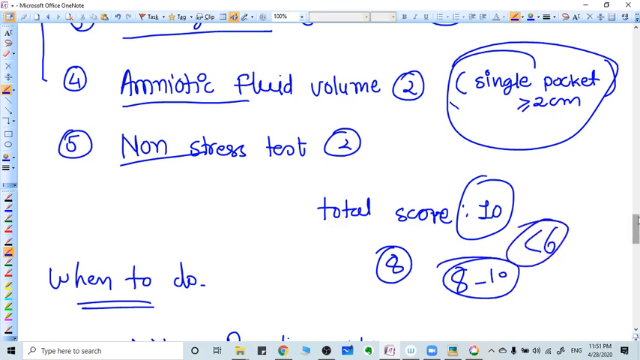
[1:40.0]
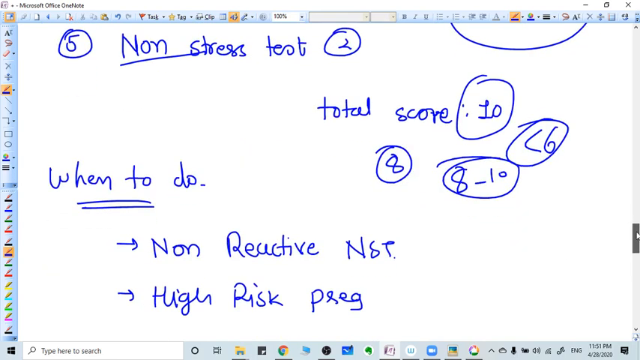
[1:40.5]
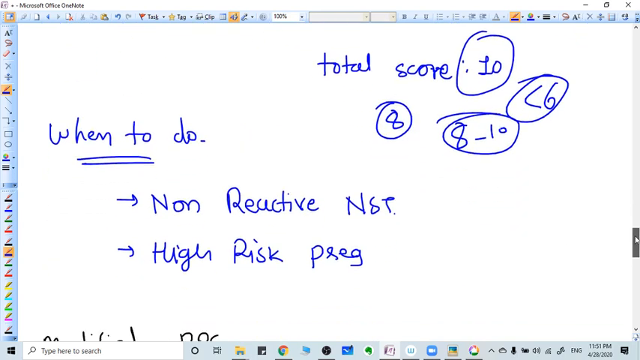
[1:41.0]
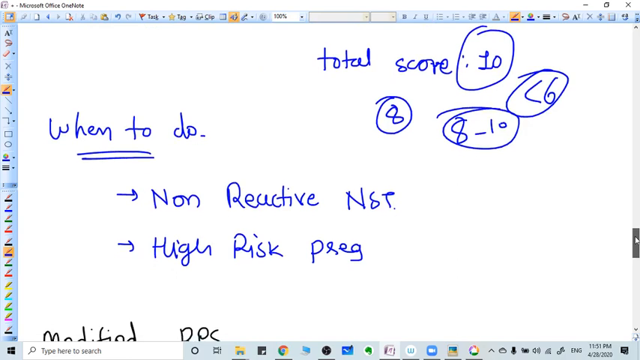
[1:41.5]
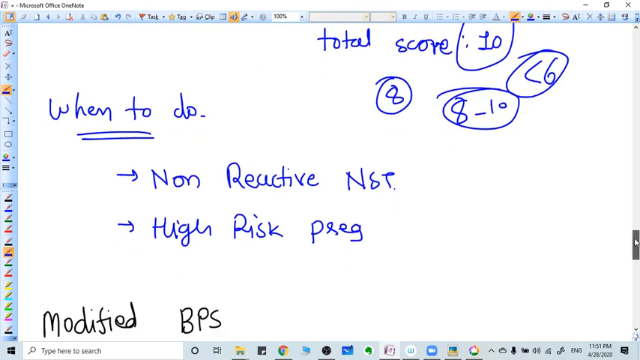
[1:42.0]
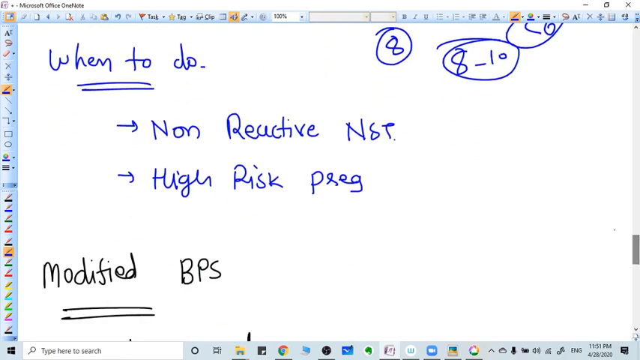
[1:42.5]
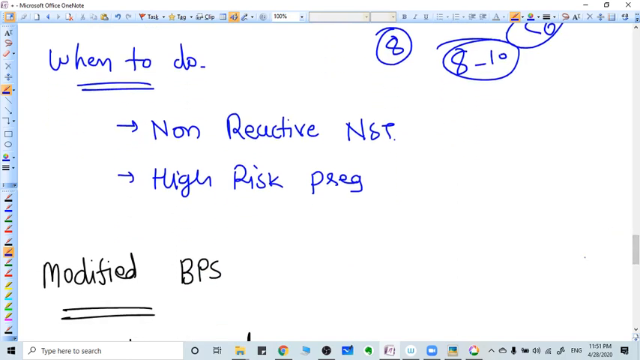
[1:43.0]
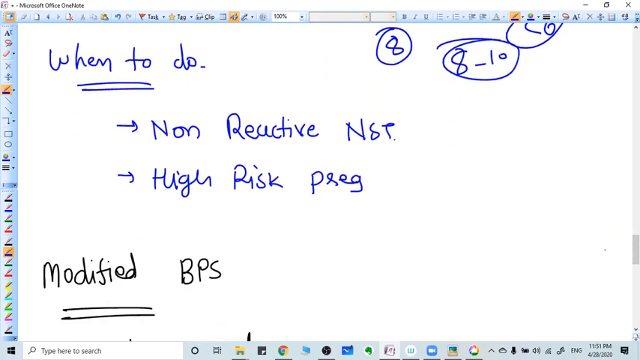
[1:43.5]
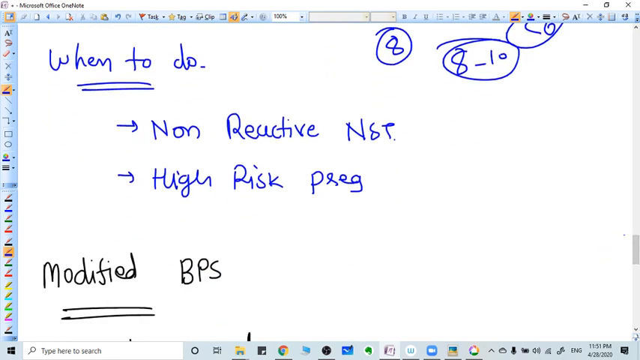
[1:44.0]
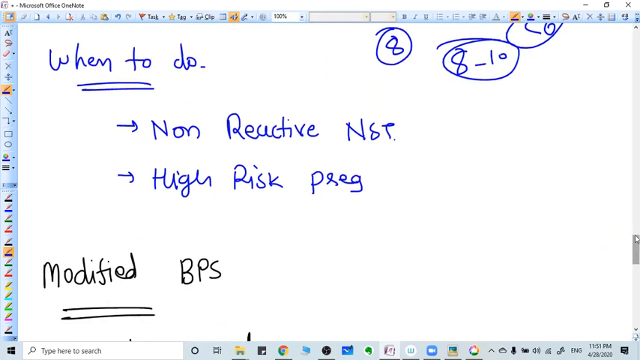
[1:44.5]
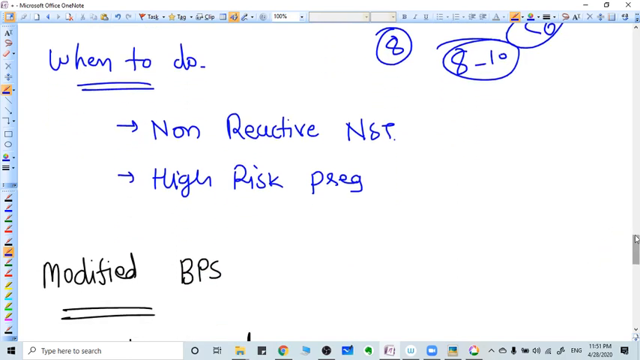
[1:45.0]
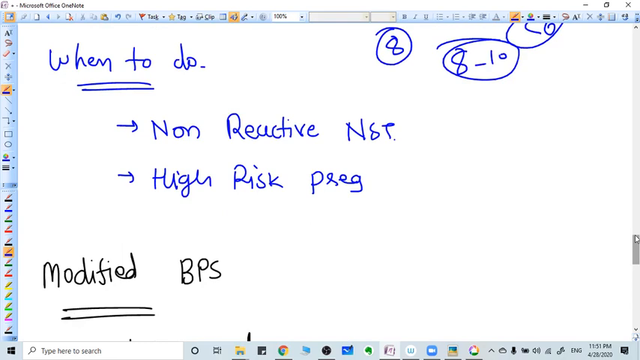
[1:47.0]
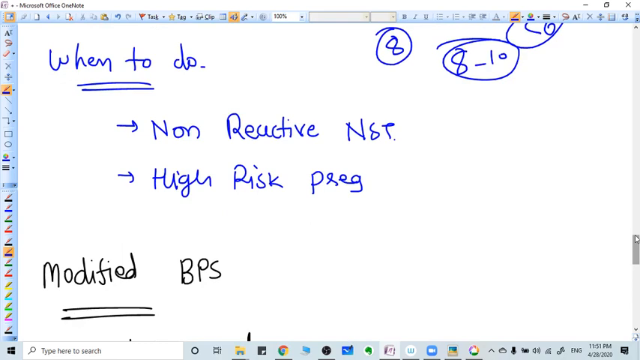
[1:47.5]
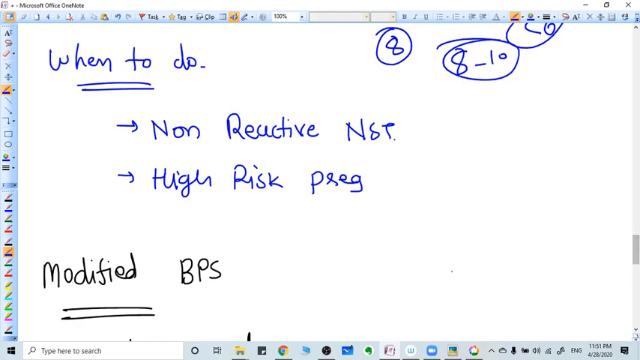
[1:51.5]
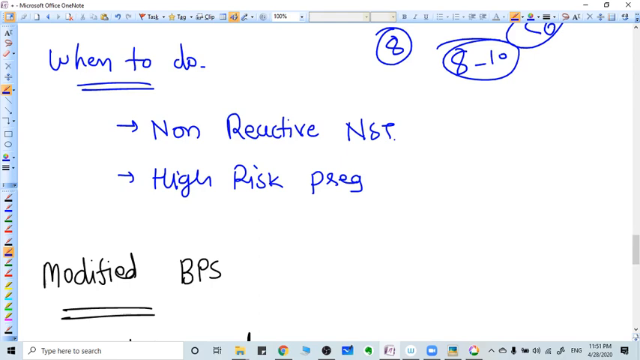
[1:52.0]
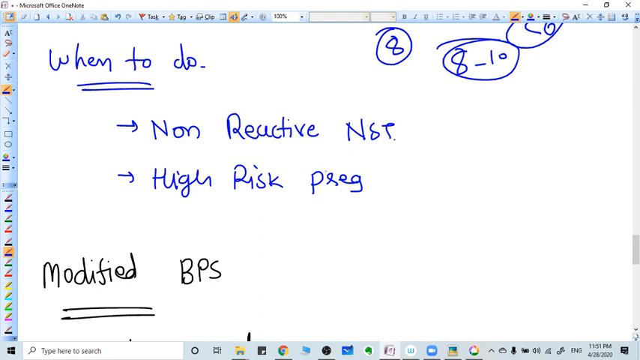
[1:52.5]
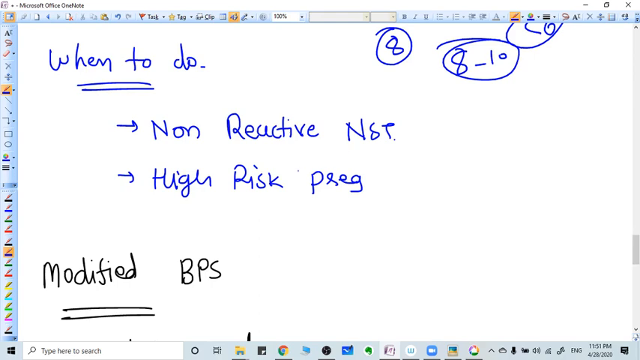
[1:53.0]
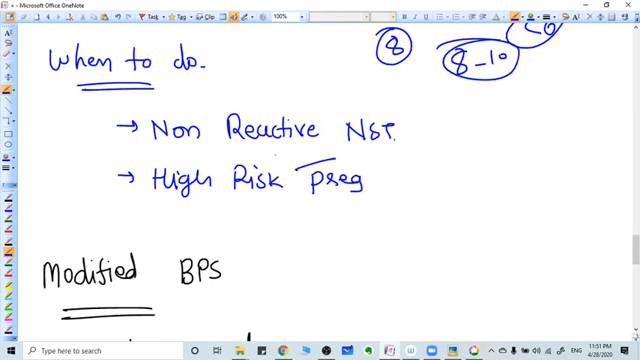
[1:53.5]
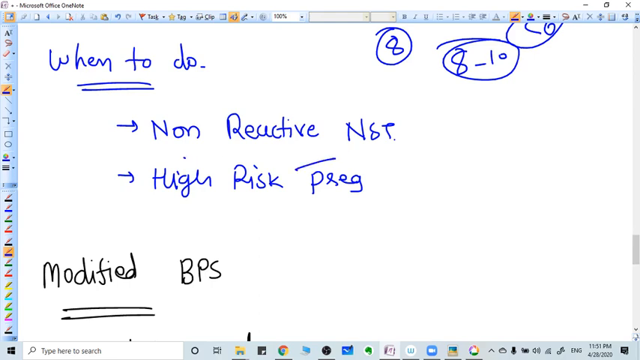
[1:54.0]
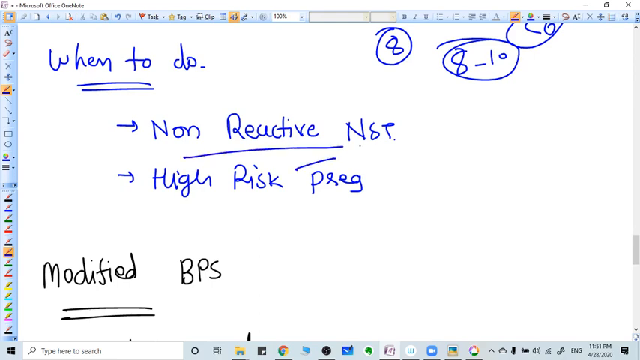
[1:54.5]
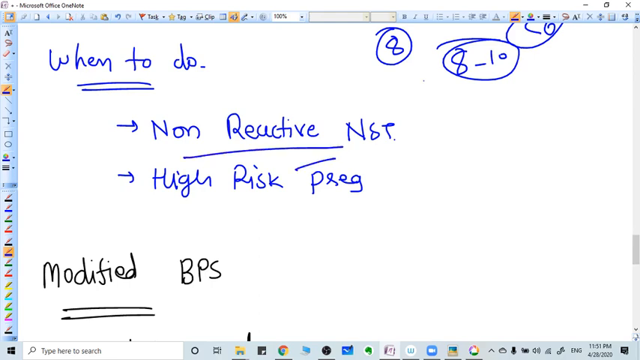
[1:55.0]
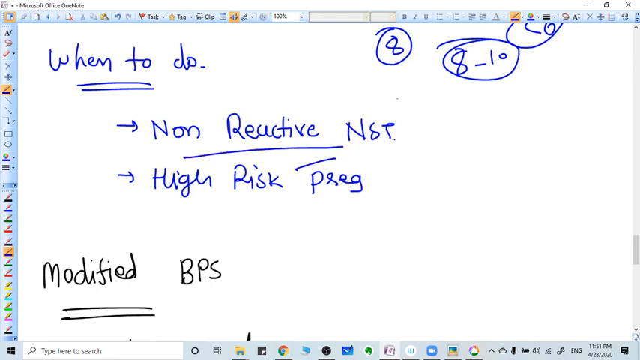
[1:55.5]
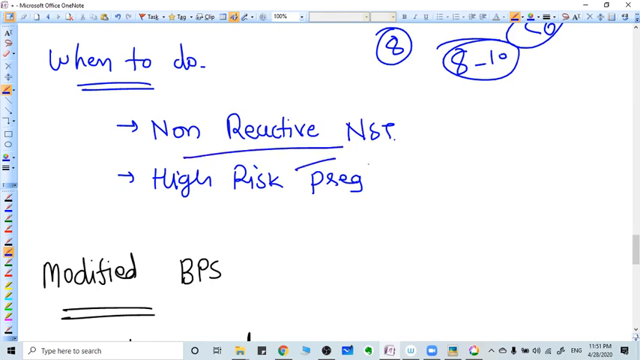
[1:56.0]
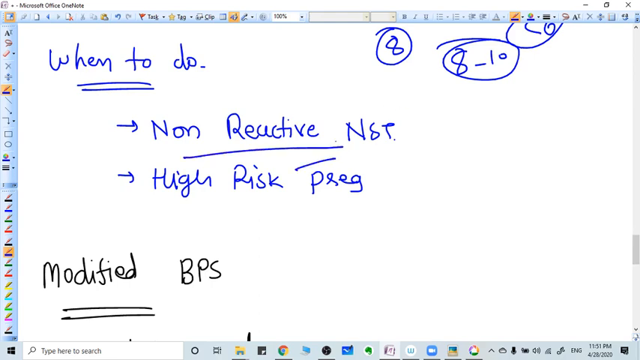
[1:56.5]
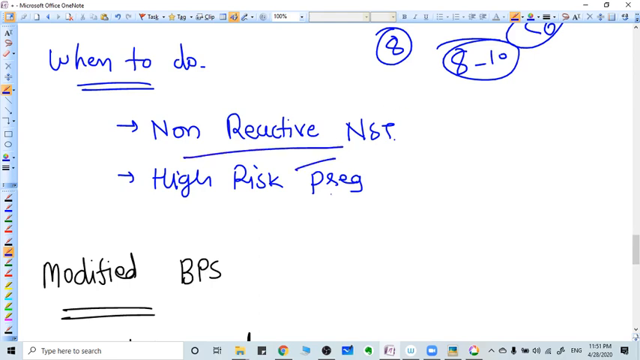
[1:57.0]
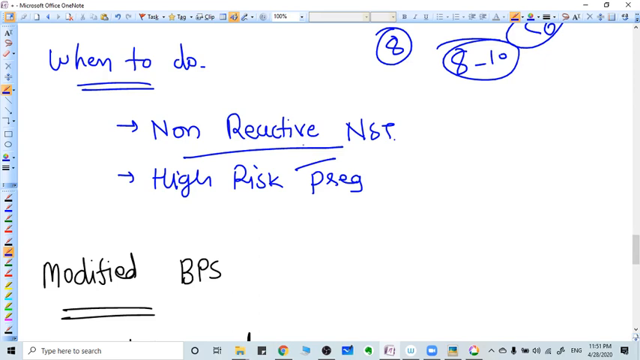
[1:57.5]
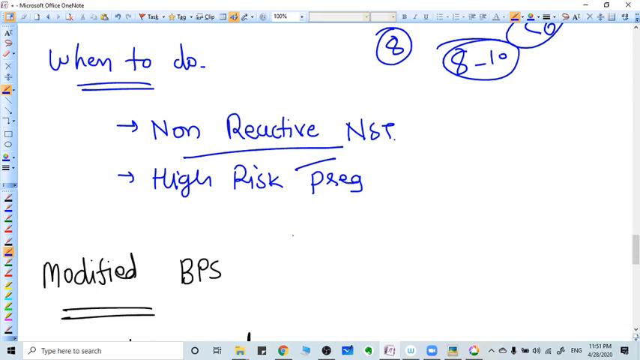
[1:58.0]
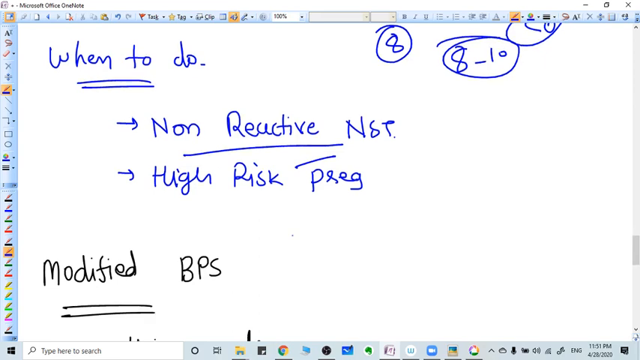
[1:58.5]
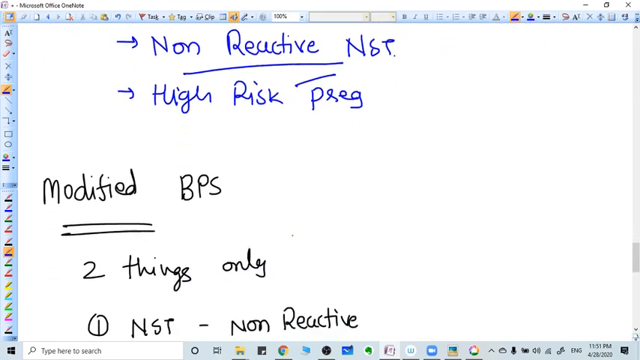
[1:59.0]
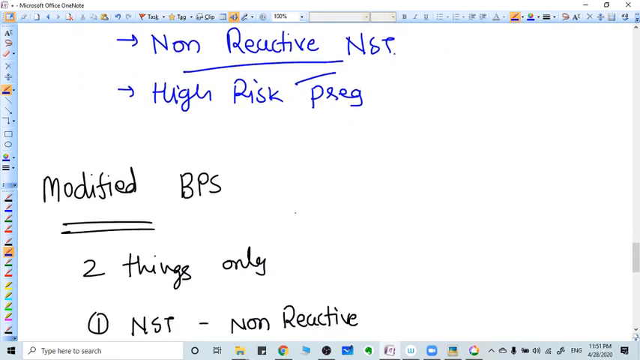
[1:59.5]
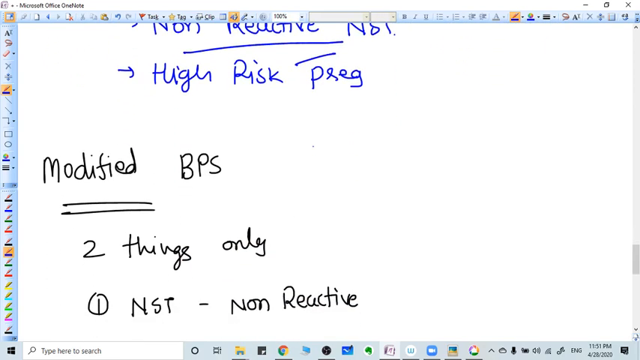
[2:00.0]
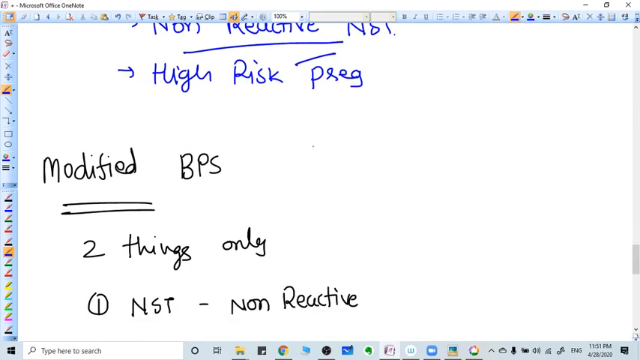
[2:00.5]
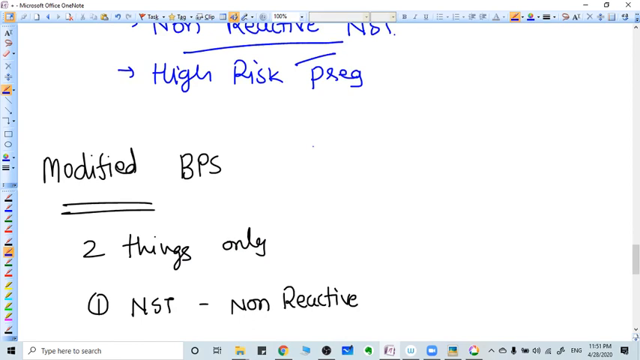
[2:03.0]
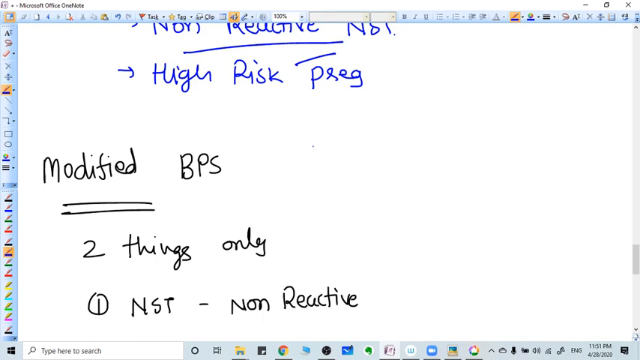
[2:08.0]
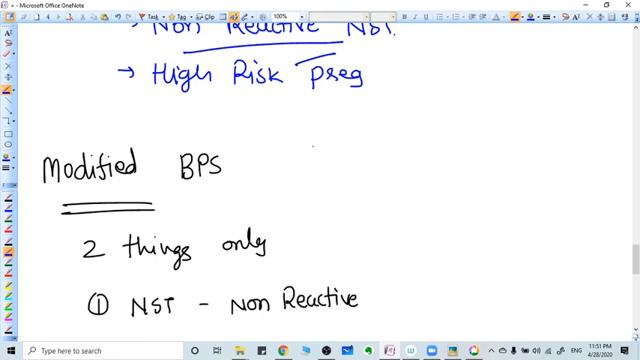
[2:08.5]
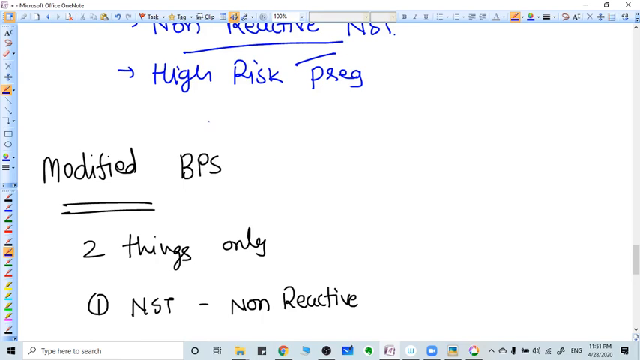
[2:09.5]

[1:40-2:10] The view is at the "when to do" section, with the newly written 8 and "8 to 10," both circled, on the right. The page scrolls down a little and stops at the "non-reactive NST" and high-risk pregnancy list with the arrows next to it. Underneath the high-risk pregnancy line it now says "modified BPS," written in black, with two black underlines beneath "modified." The cursor is near "non-reactive NST" and underlines that part of the note. The page then scrolls down to the underlined "modified BPS." Beneath it are two more lines of writing: the first says "two things only" and the second says "NST - non reactive," with a circled 1 before the NST.